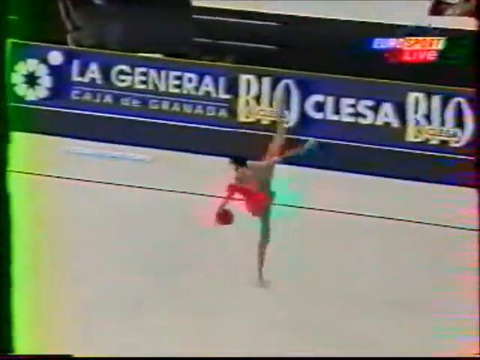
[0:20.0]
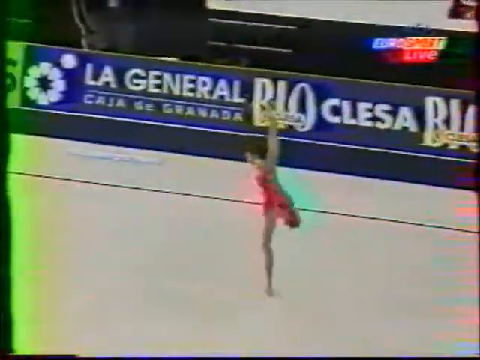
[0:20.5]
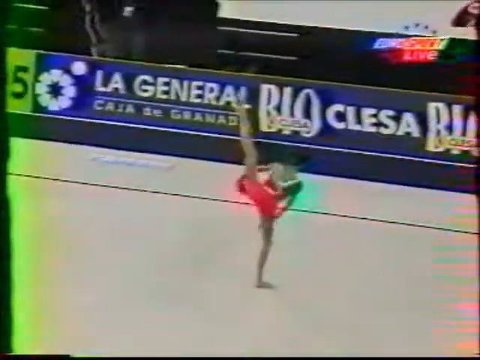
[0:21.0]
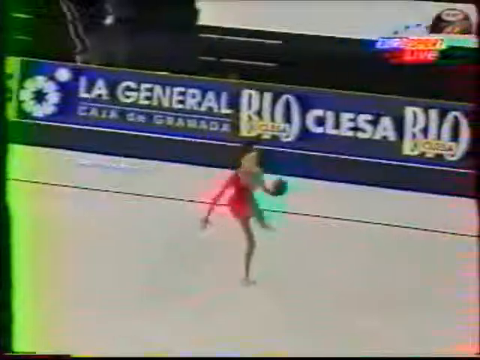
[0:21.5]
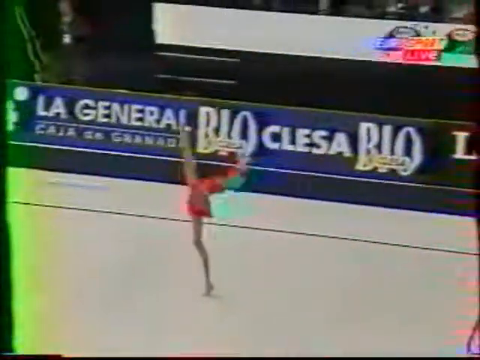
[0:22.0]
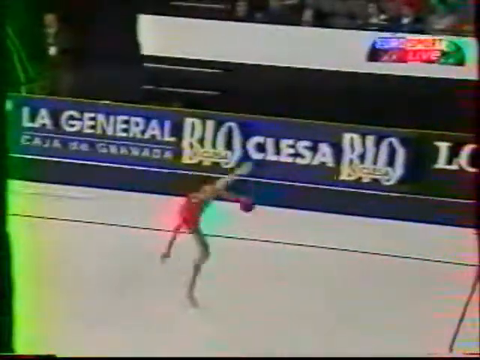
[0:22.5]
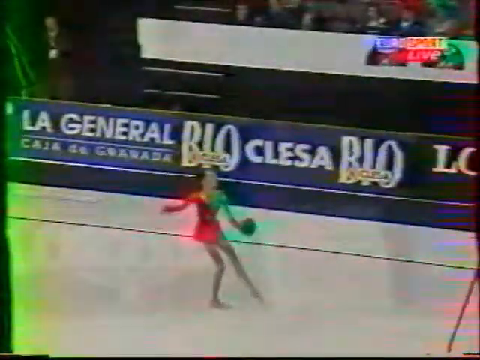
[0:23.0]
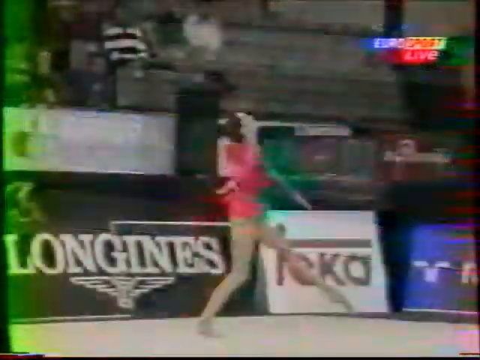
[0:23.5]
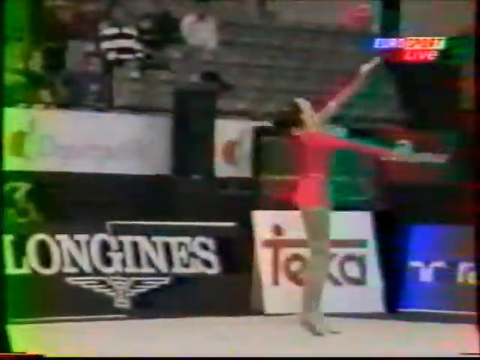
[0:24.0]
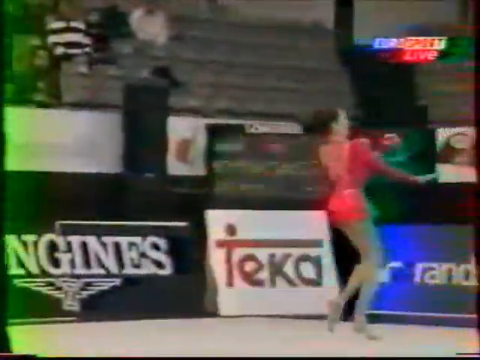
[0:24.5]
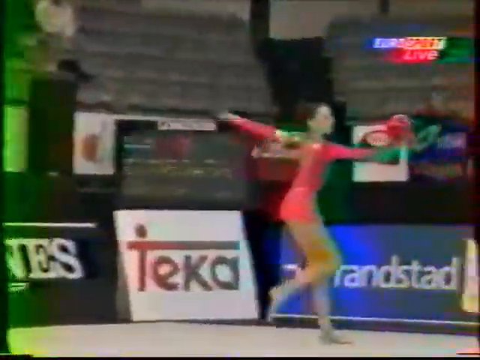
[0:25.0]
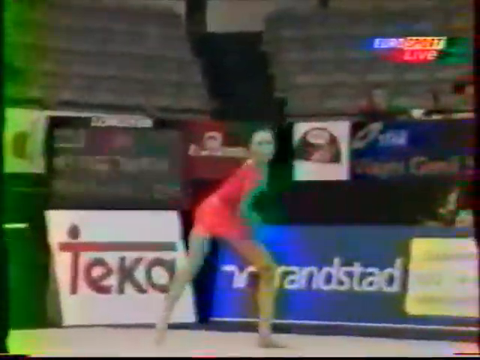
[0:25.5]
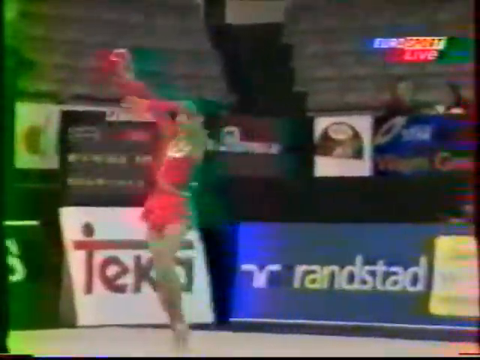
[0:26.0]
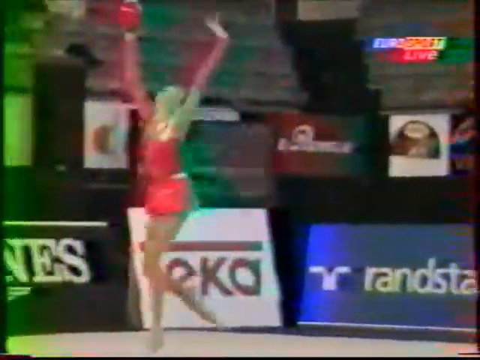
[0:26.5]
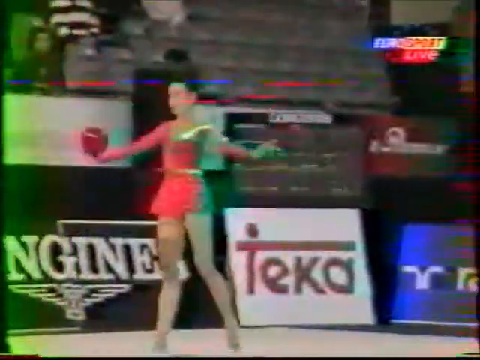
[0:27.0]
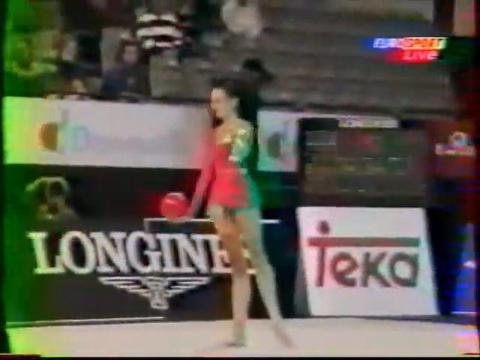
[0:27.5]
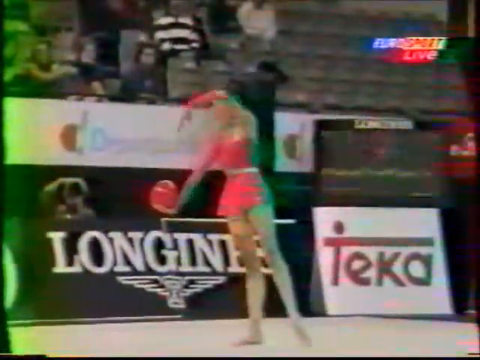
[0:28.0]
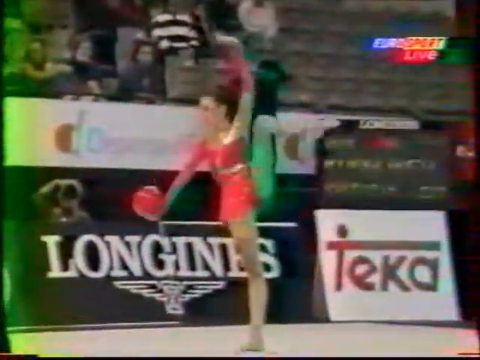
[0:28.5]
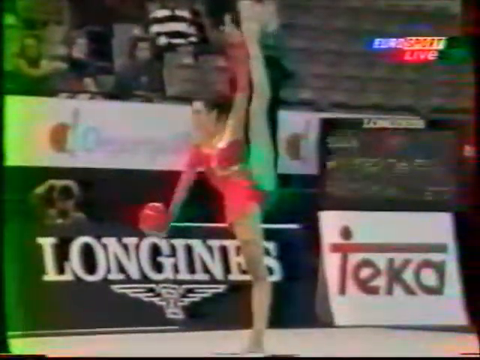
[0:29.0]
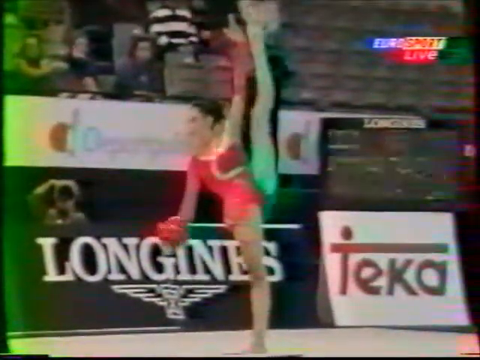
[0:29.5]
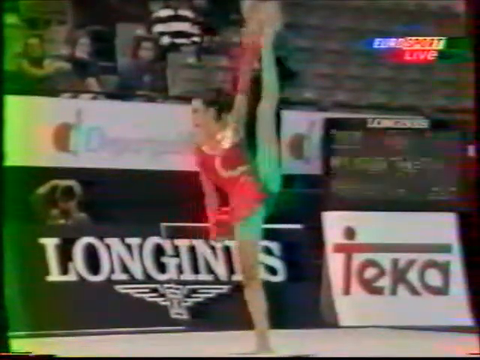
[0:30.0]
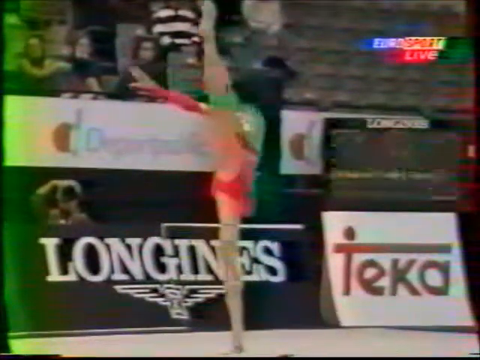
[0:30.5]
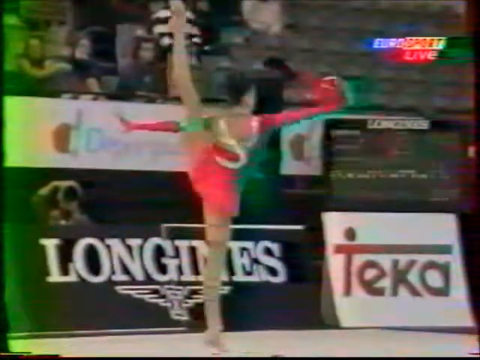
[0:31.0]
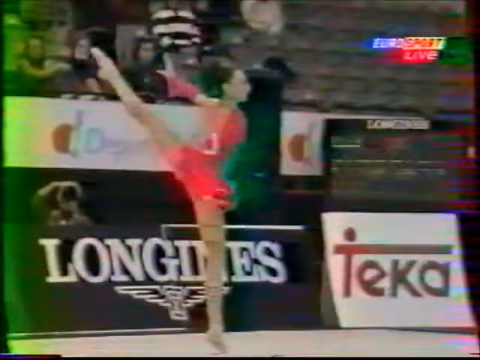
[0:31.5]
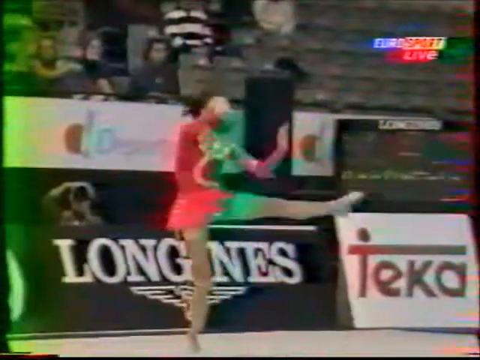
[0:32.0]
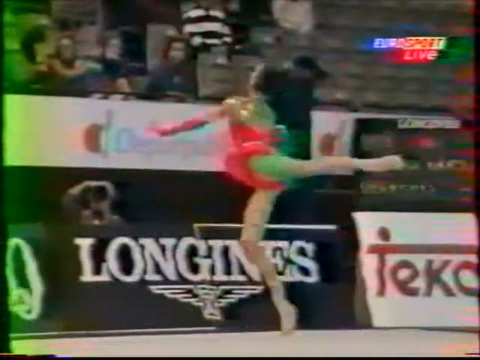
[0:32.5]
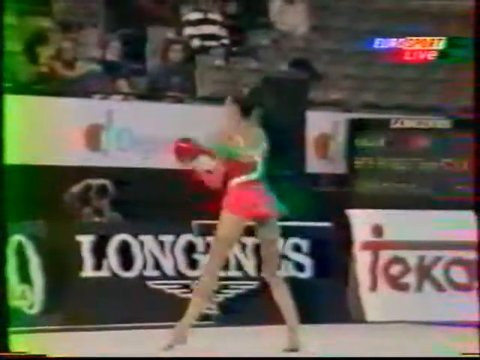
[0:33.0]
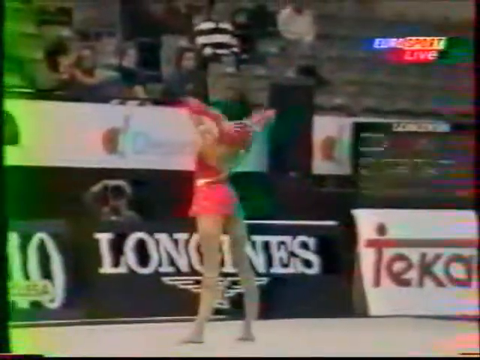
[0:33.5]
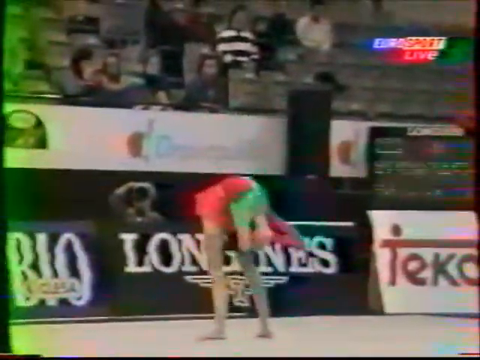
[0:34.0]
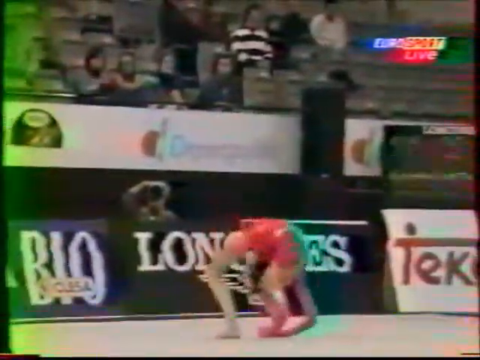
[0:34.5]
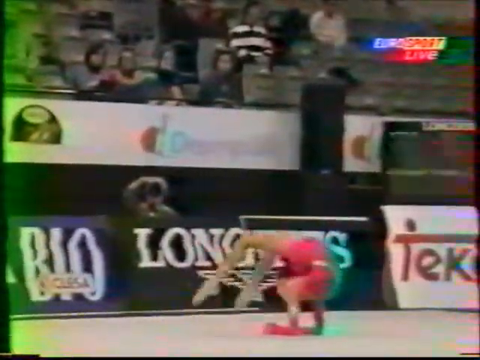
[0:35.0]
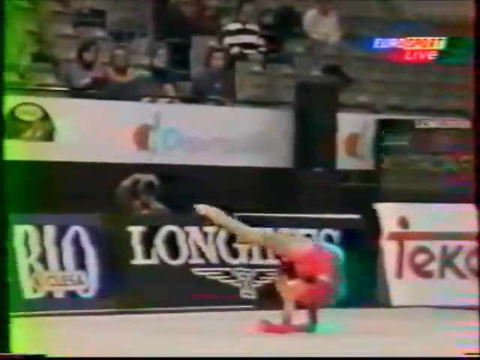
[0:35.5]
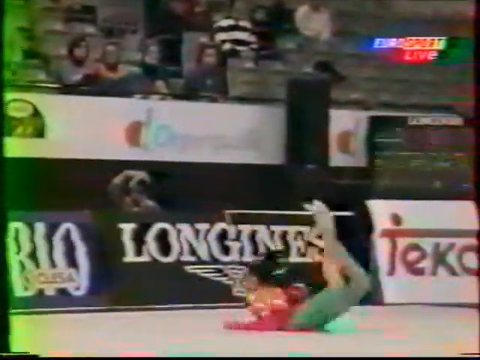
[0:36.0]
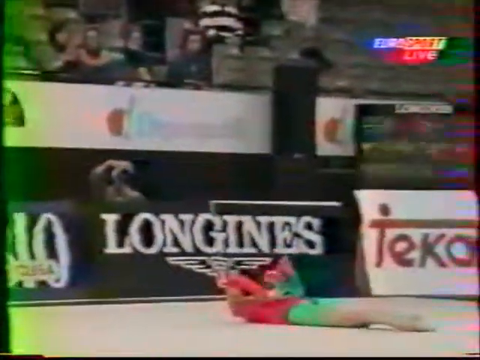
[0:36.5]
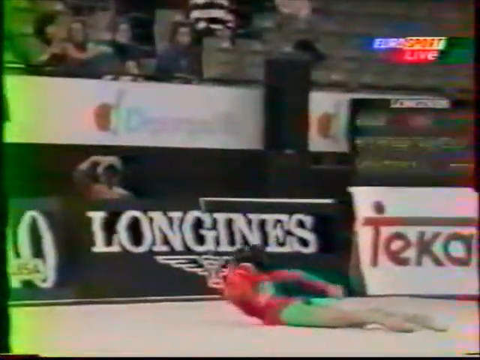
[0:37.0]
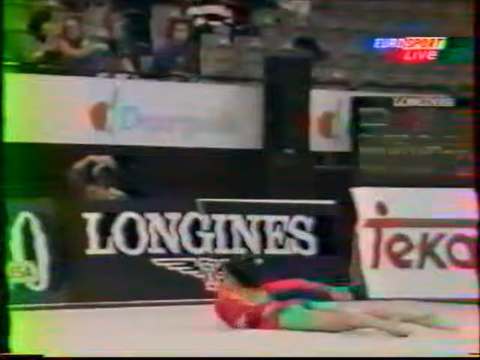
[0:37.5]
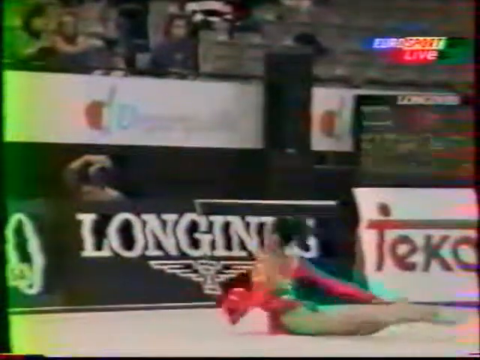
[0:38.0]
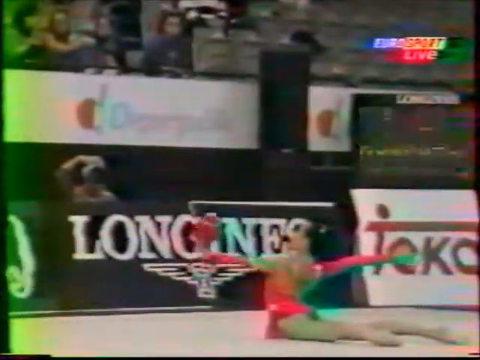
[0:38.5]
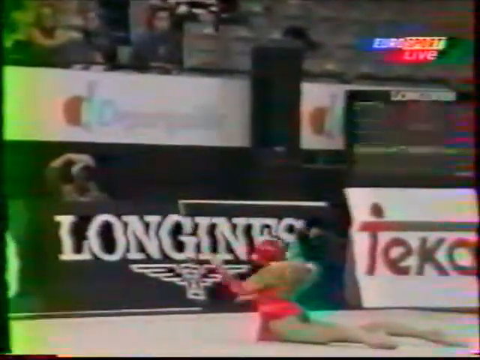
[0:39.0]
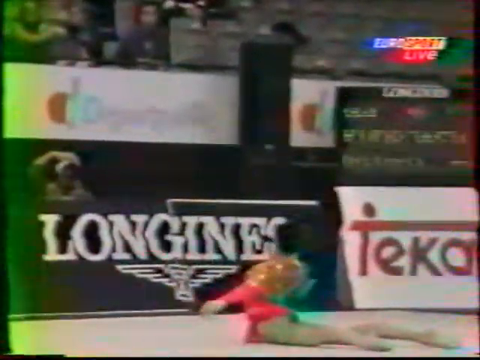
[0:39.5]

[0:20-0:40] The woman, in a red outfit with black hair, has her leg up in the air and a ball in her other hand. Advertisements are visible on the side, and a Eurosports Live logo is in the top right corner. She moves around, throws her ball up in the air, kind of dancing, and keeps putting her legs straight up in the air. She jumps and leaps backwards, then is on the ground moving her ball around, doing little tricks with it. She appears to be in a stadium of some sort, with a few people in the crowd, maybe 10 or so, and a lot of empty seats. More advertisements around the stadium come into view as the video progresses. The footage appears very grainy, with a lot of different greens. She seems very flexible.